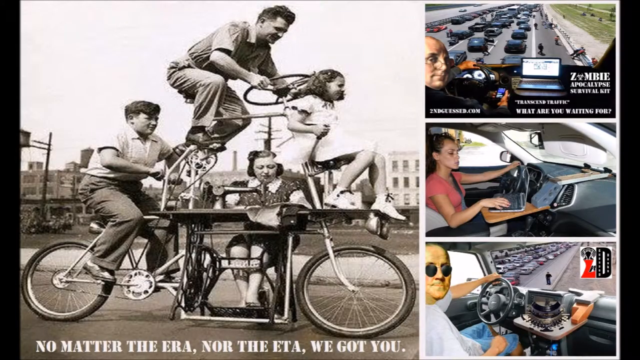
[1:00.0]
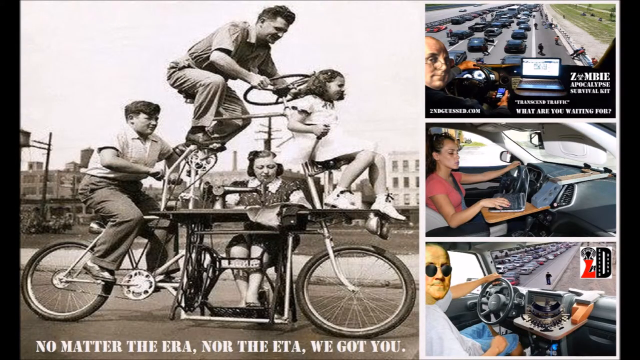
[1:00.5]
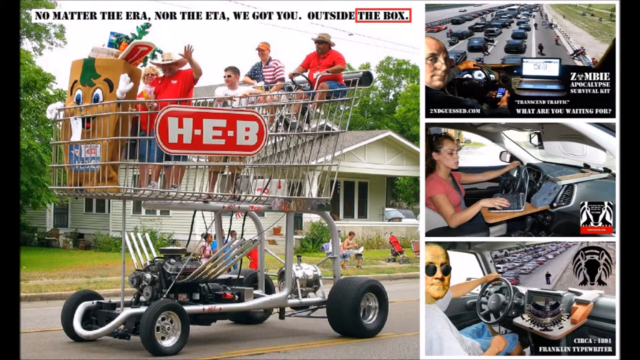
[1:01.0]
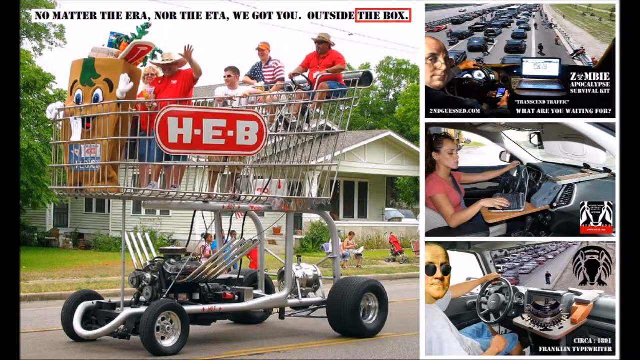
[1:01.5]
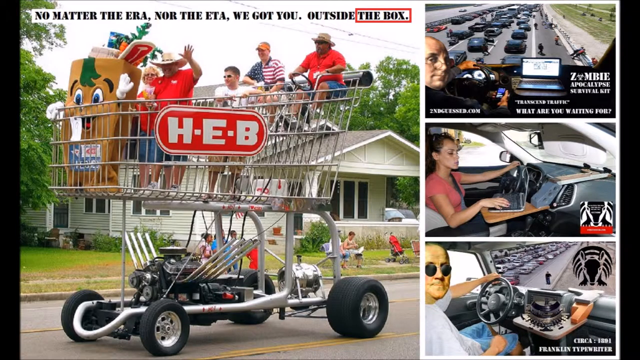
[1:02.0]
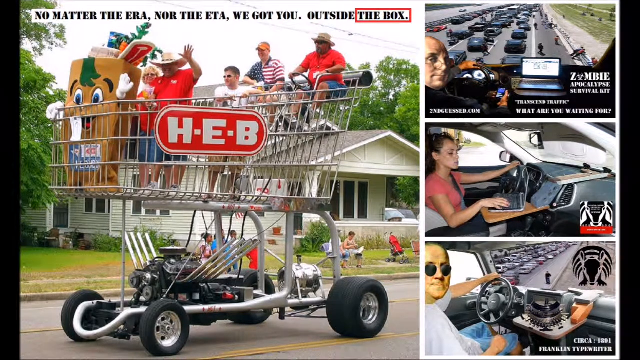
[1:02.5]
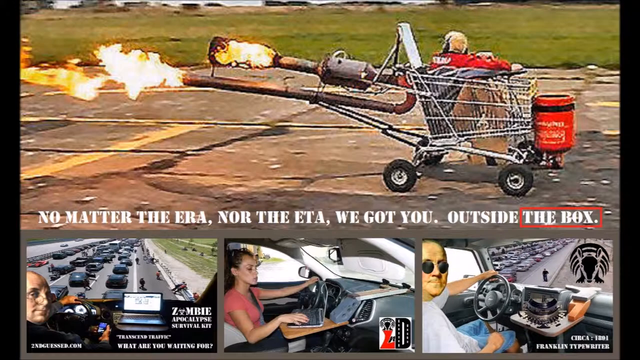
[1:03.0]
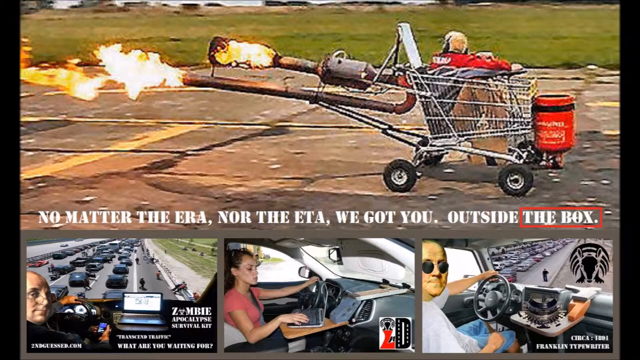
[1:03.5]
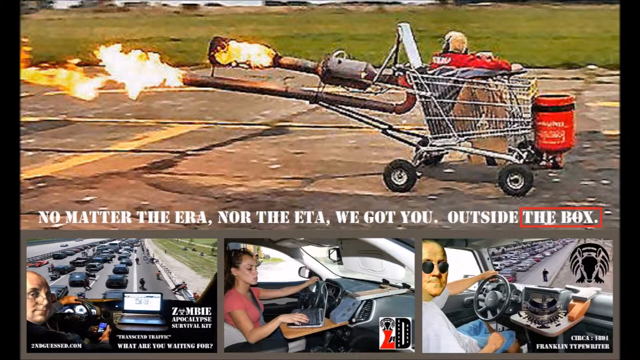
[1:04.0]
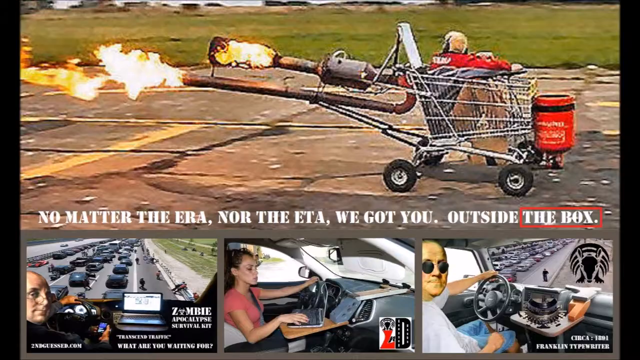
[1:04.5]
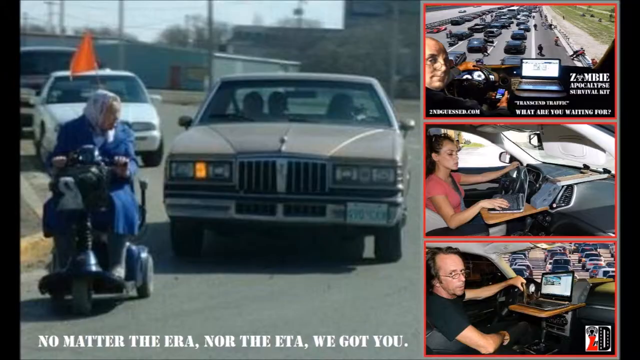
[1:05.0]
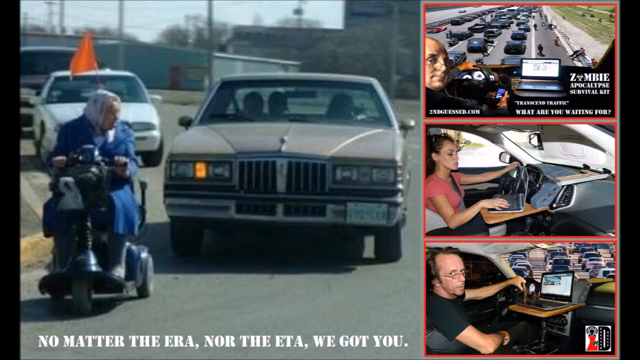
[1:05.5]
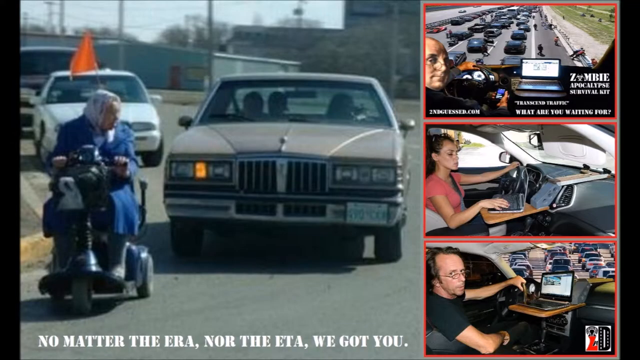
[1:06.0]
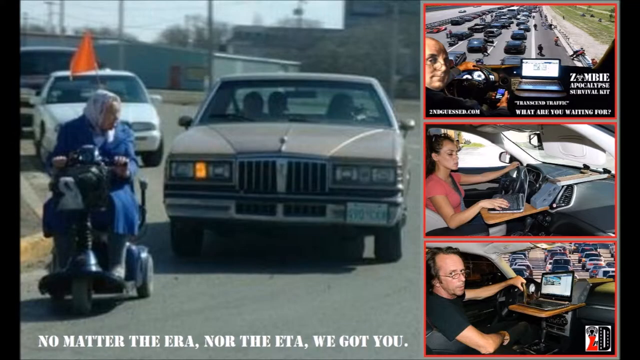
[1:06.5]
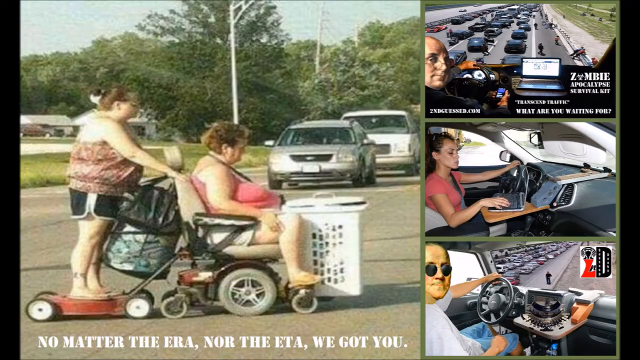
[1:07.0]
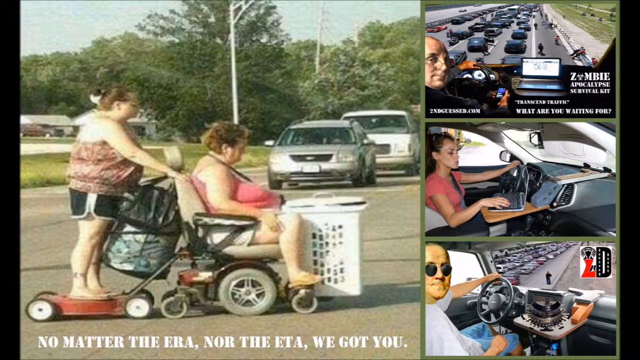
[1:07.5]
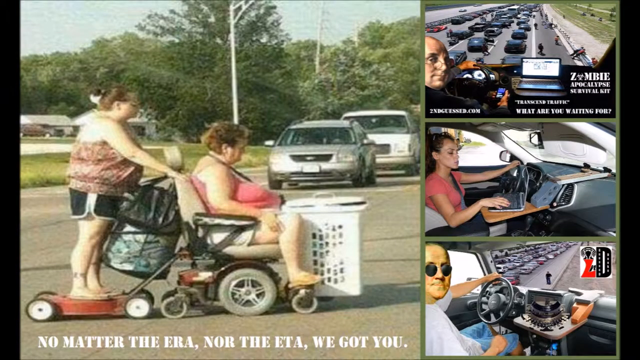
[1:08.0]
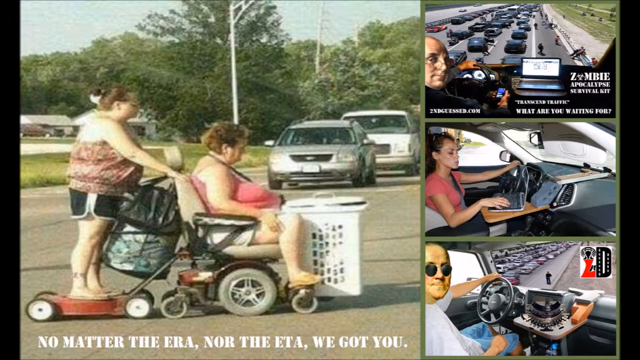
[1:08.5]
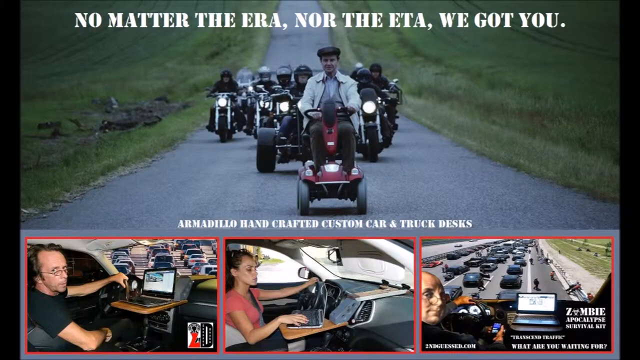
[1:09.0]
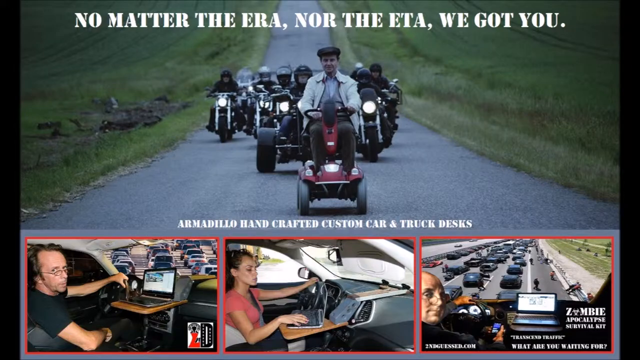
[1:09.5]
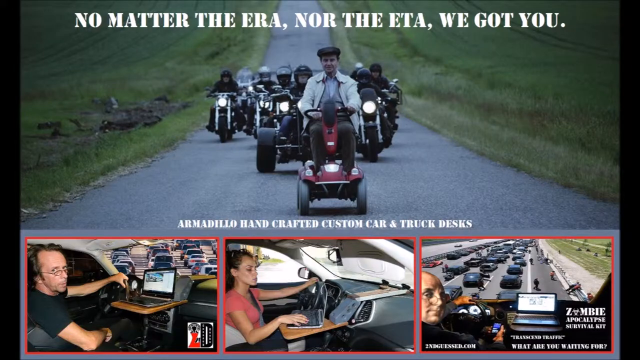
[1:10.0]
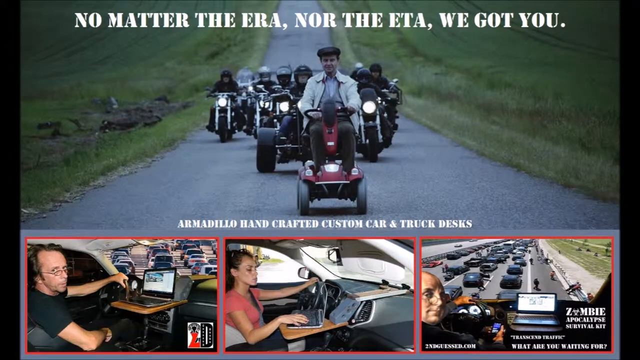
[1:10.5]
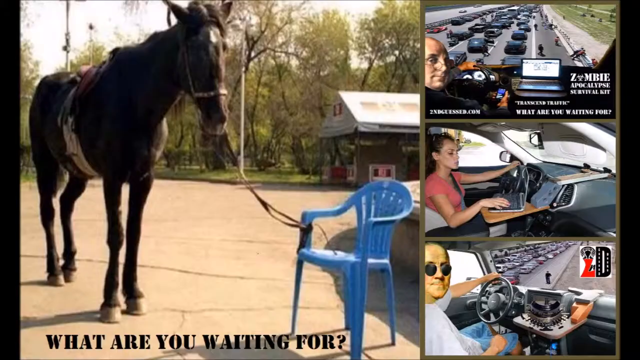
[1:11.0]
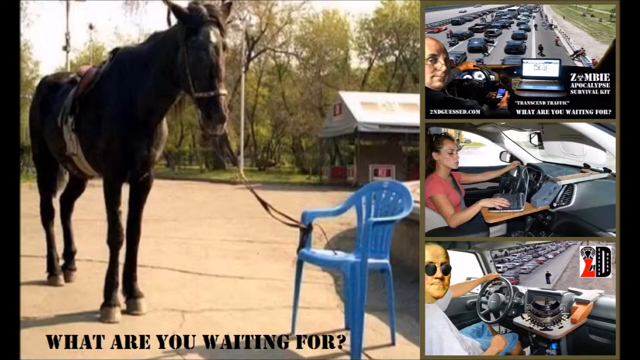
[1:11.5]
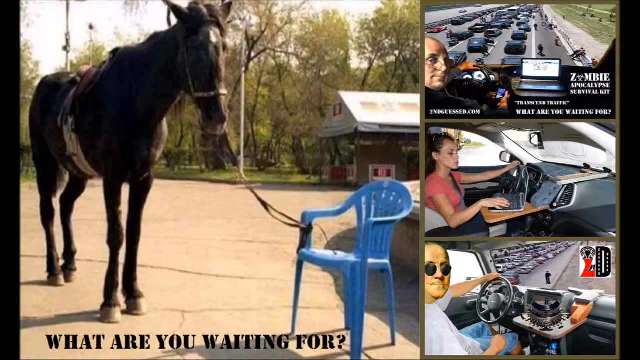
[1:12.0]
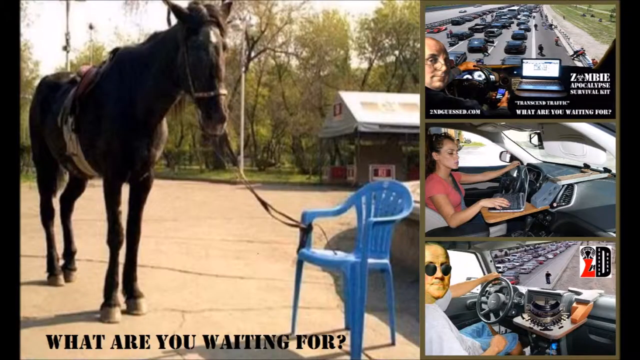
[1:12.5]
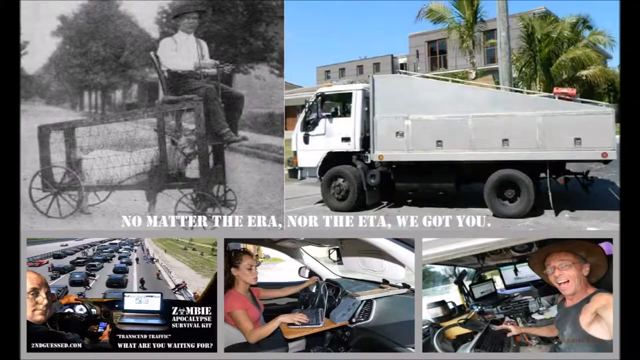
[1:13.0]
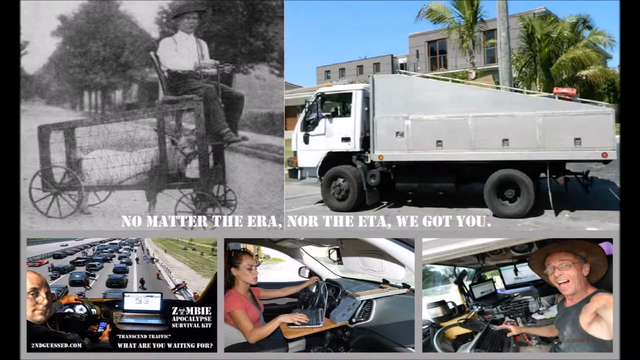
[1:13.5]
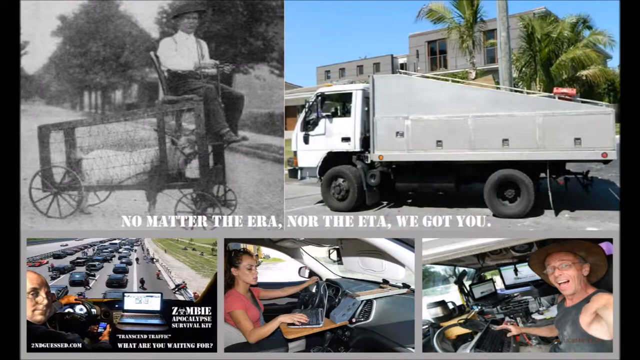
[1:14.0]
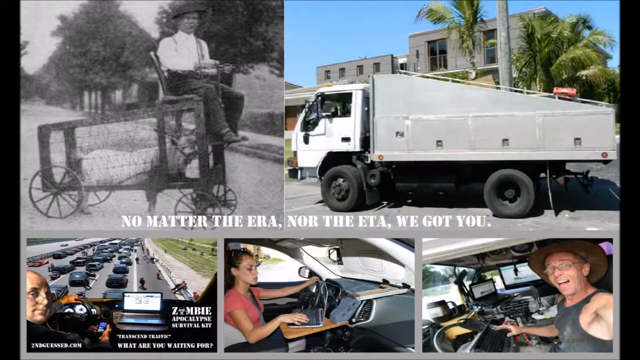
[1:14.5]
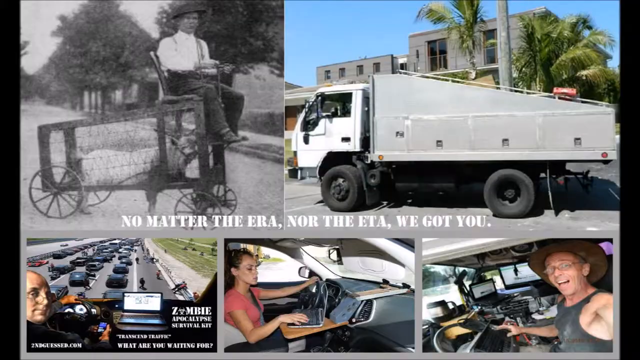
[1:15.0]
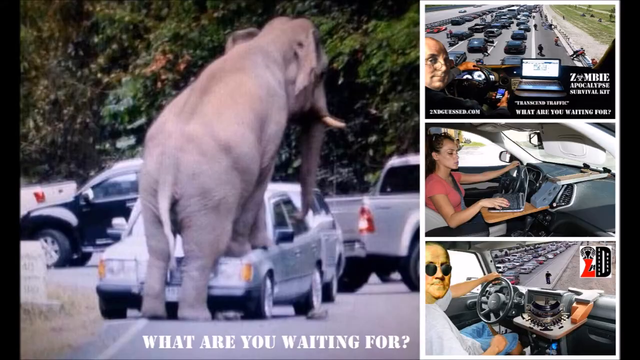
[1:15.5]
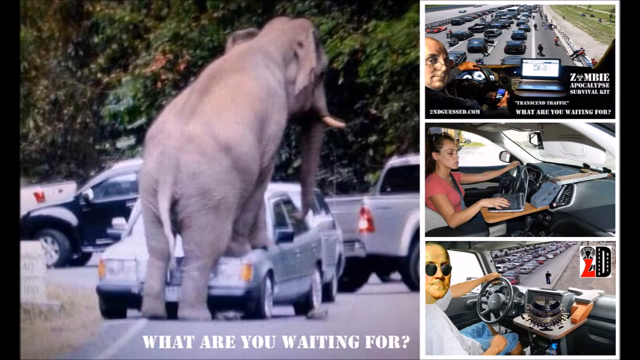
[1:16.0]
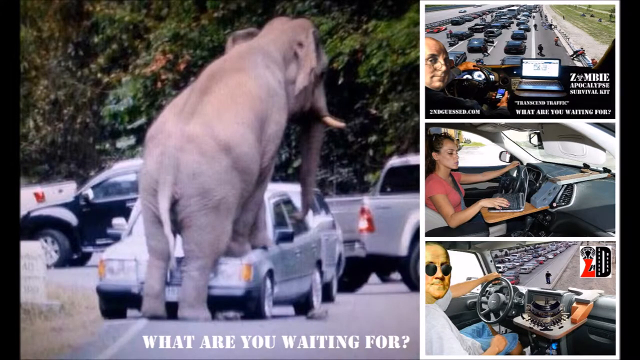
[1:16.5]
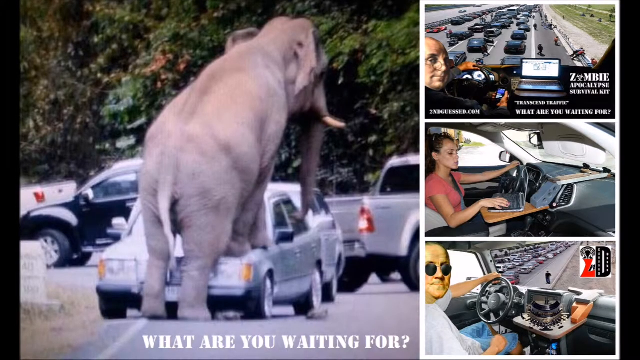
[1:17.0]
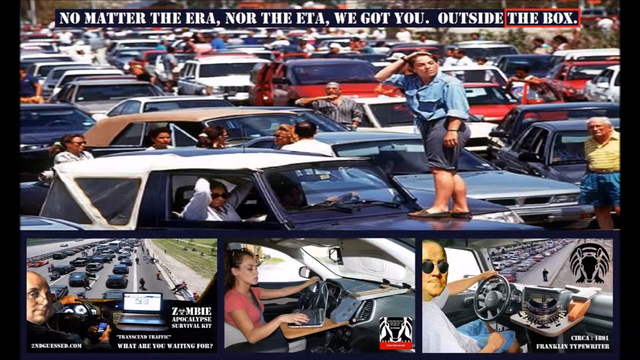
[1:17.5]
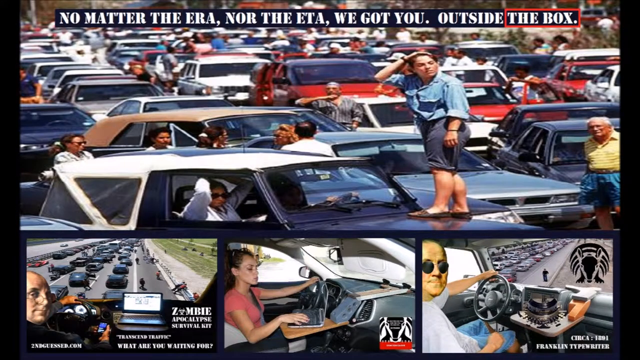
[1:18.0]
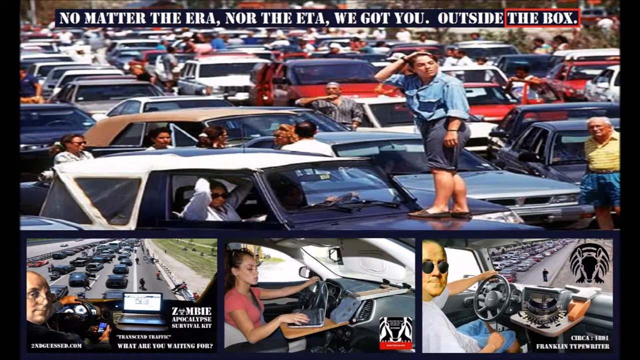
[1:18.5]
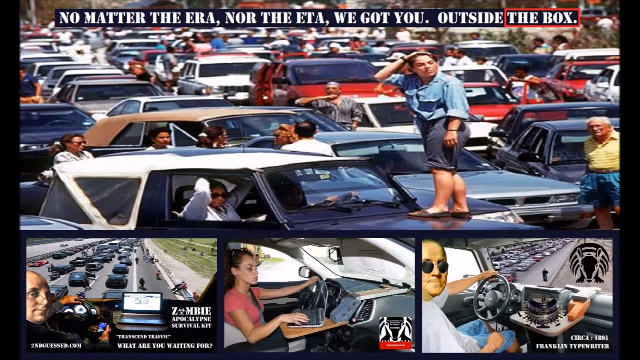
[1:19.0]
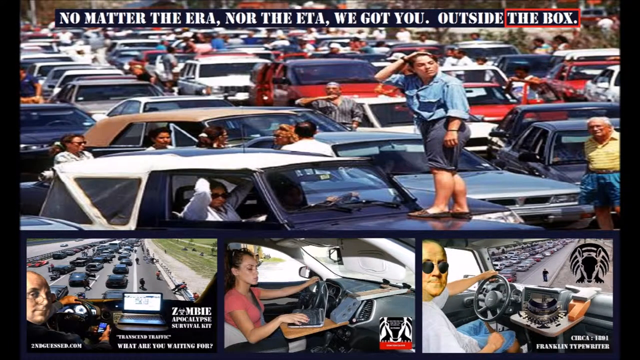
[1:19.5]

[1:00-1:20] A motorised shopping trolley with "H.E.B." written on it holds about six people, along with images of shopping. Another motorised shopping trolley has a sort of jet engine on the back and one person driving it. A pensioner on a motorised scooter causes a huge traffic jam. Another motorised scooter has a person riding on the back and a huge luggage container on the front. A motorised scooter Hells Angel gang follows. A horse is tied up against a flimsy plastic chair of the kind found outside houses. Next is what appears to be a lorry with a strange cabin on the back. An elephant stands on top of a Mercedes Benz car. In a huge traffic jam, people have got out and stand on their cars to see what is happening; they are in the blazing sun and seem to be getting annoyed. Finally, cars are trapped in a huge snow drift.